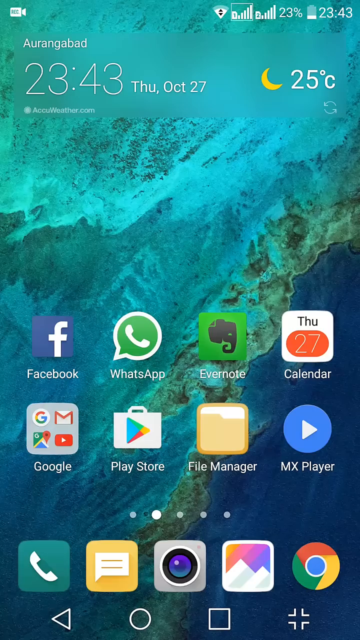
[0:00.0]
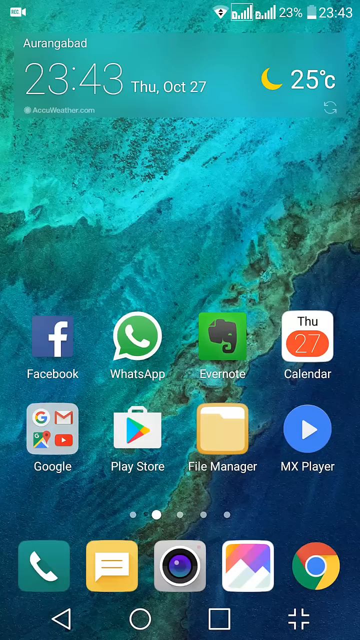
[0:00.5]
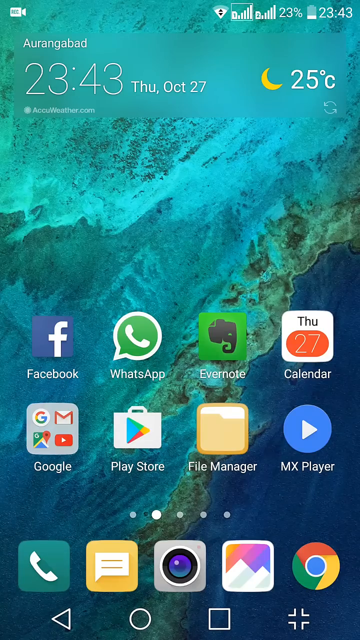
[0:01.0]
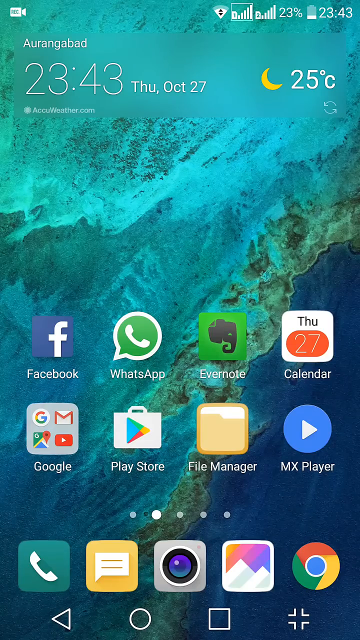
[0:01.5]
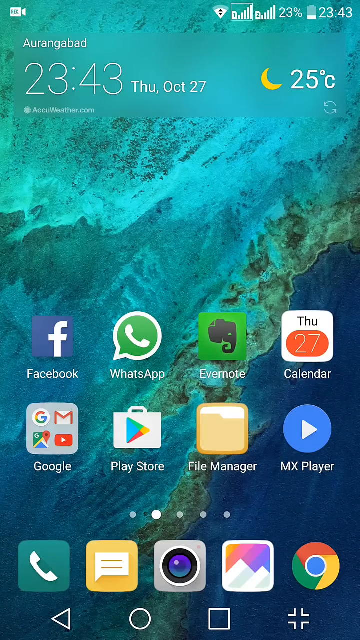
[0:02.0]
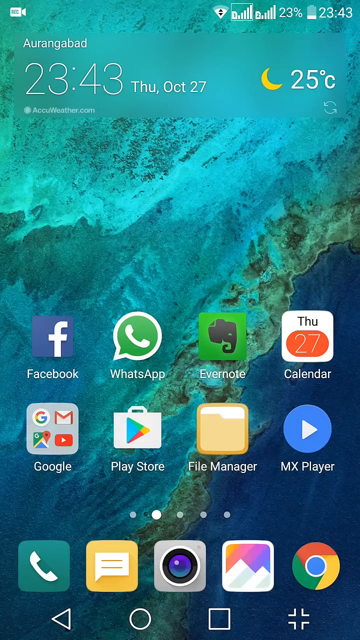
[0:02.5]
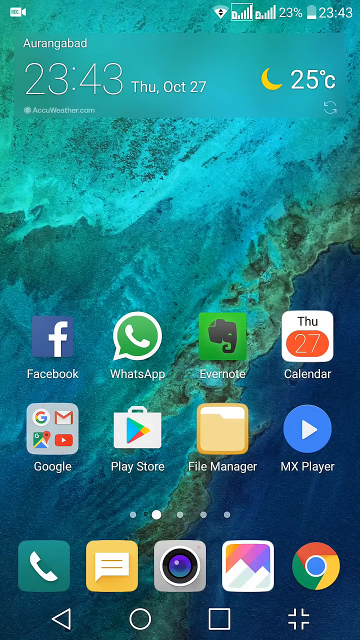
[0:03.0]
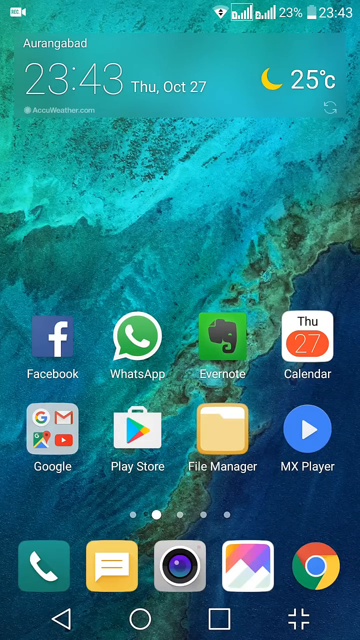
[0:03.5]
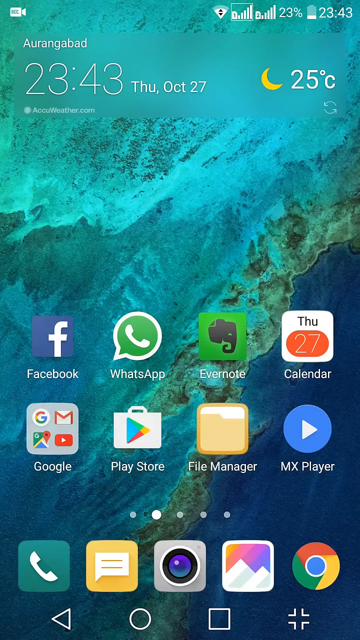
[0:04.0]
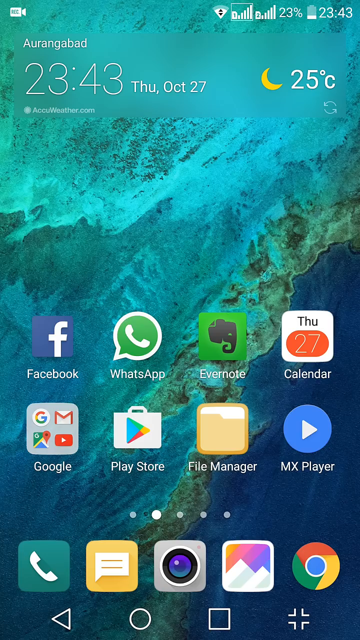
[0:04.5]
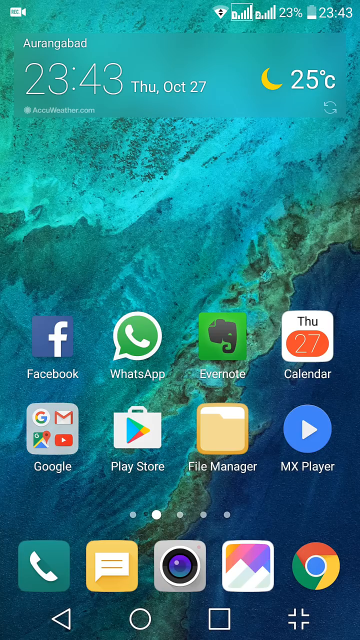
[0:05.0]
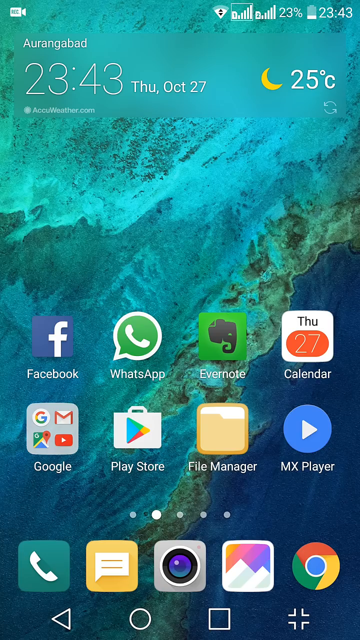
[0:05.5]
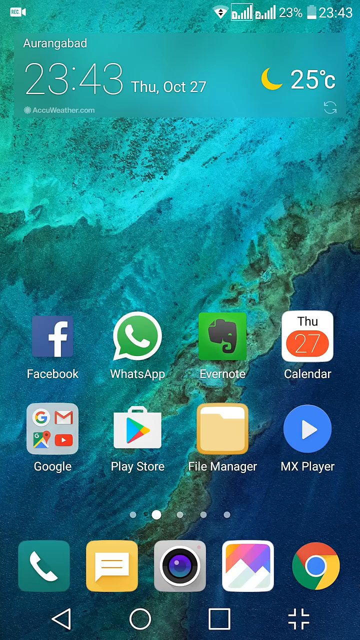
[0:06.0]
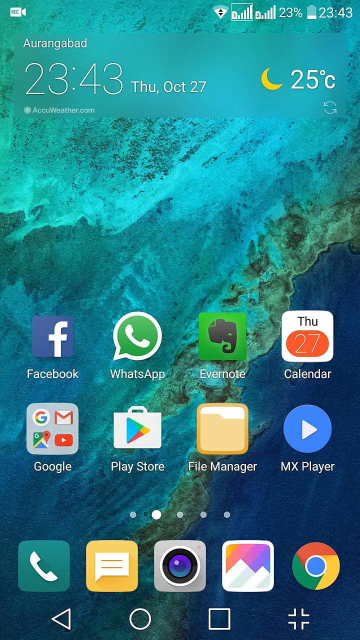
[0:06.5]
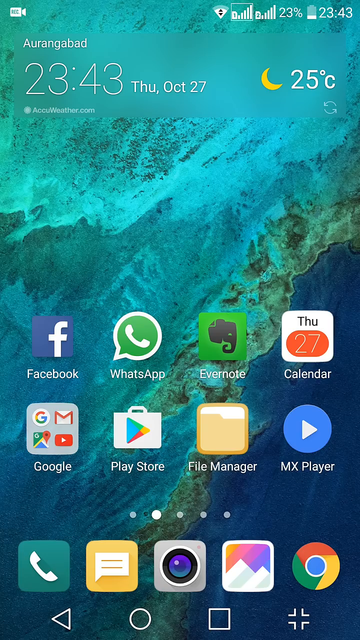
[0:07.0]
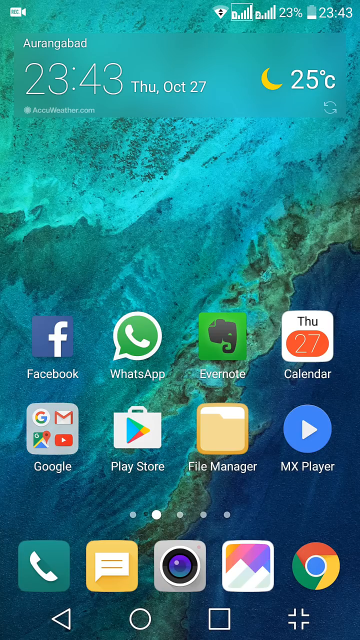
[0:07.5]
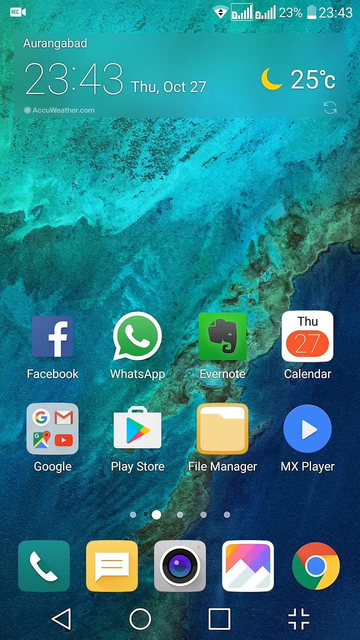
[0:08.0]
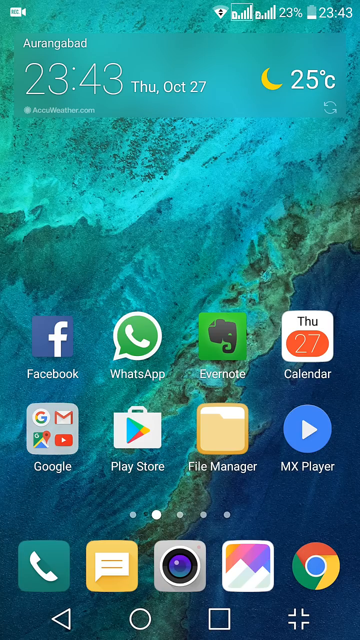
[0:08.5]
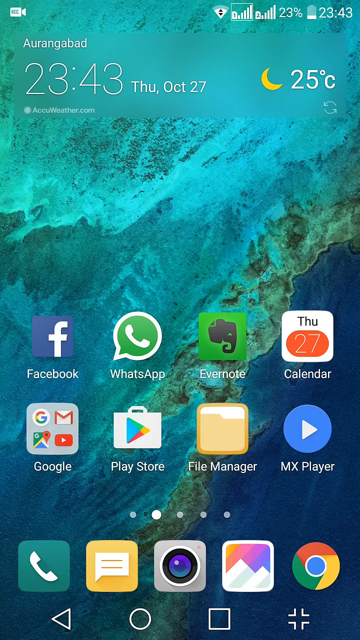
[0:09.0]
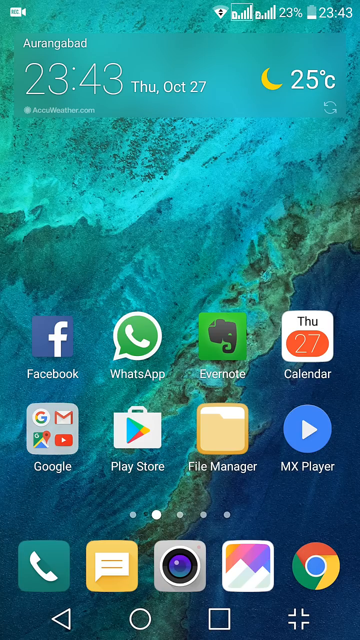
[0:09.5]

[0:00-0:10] The view is of someone's phone screen. In the upper right-hand corner the time reads 2343 in military time, almost midnight, and the battery is charged at only 23%. A blurry word appears to read "AURANGABAD", with the time shown again. The screen shows "THU" for Thursday and "OCT 27" for October 27th, along with a moon and "25 degrees Celsius". Apps on the screen include Facebook, WhatsApp, Evernote, Calendar, Google Play Store, File Manager and MX Player. Along the bottom are phone, text, camera and gallery icons, plus one that may be Google Chrome.